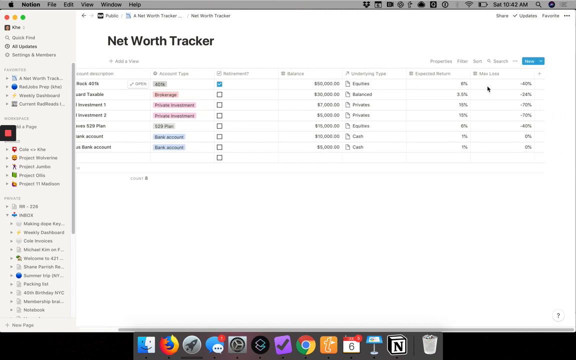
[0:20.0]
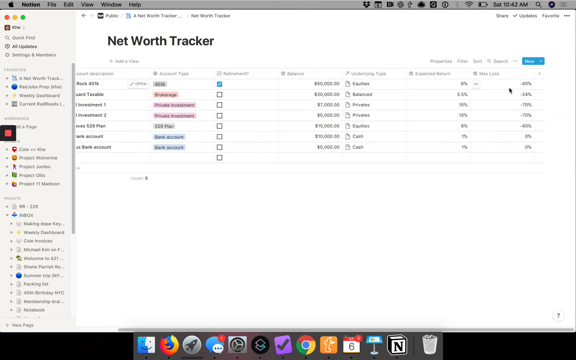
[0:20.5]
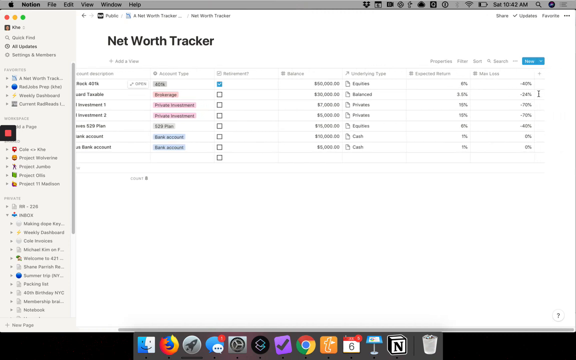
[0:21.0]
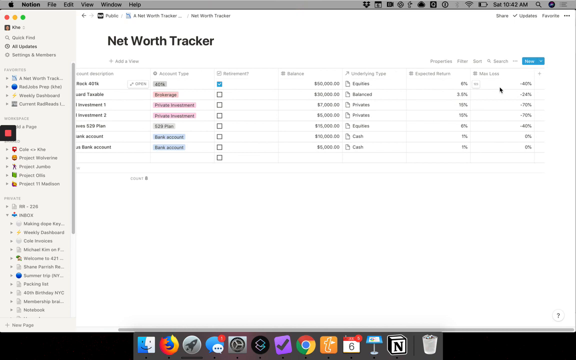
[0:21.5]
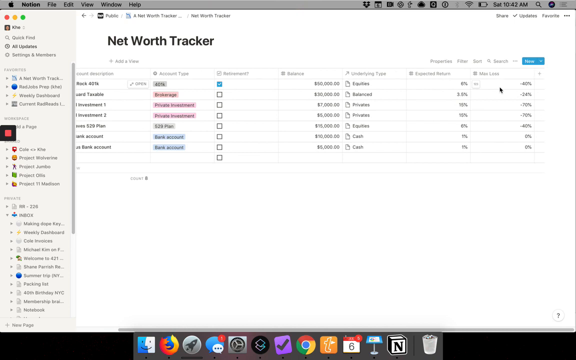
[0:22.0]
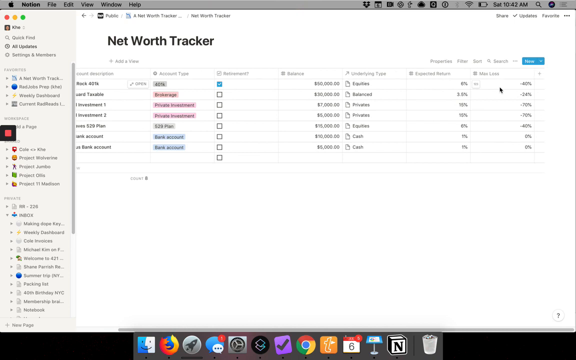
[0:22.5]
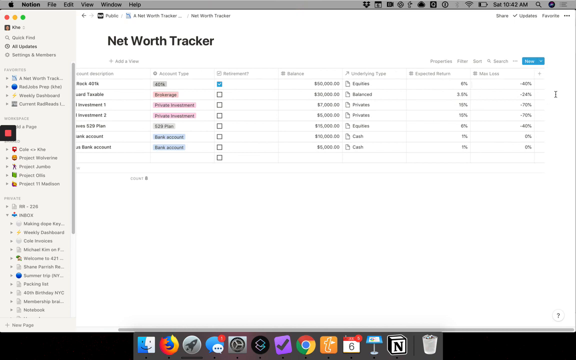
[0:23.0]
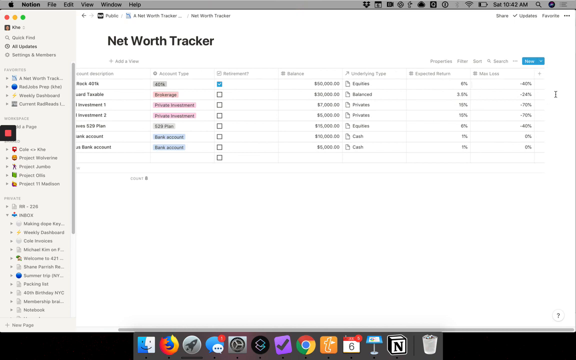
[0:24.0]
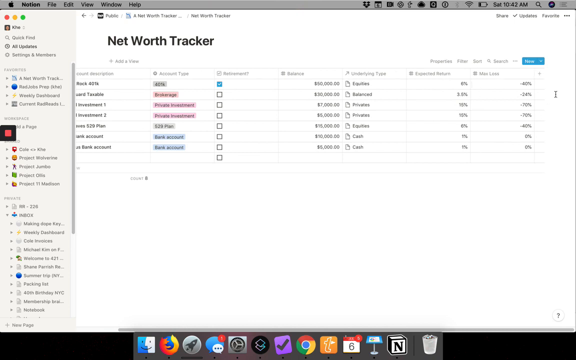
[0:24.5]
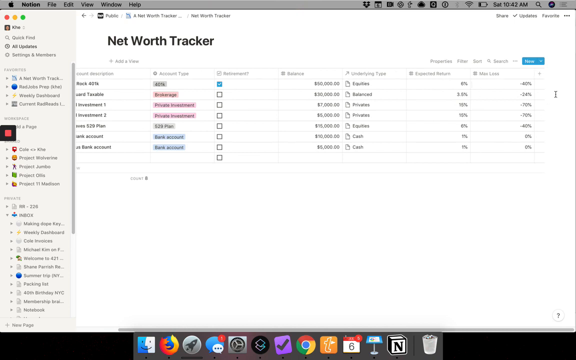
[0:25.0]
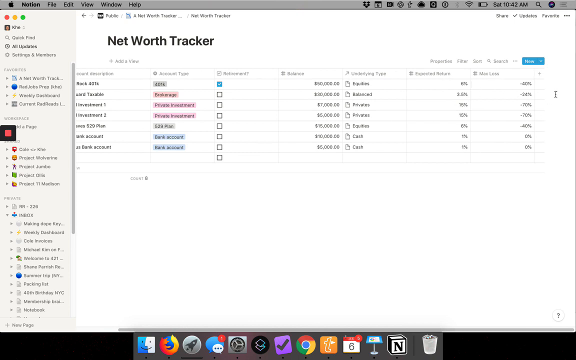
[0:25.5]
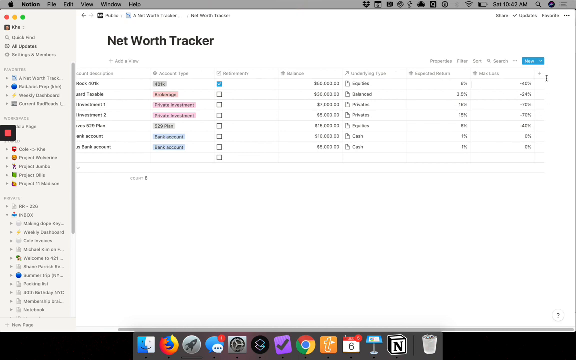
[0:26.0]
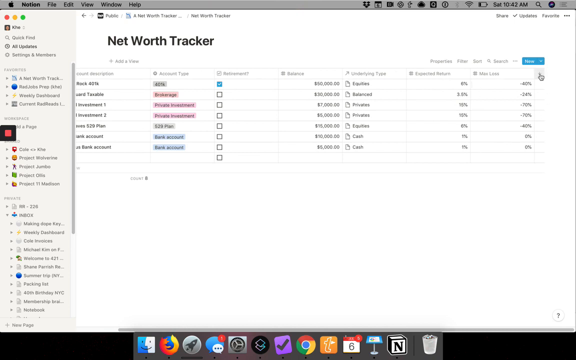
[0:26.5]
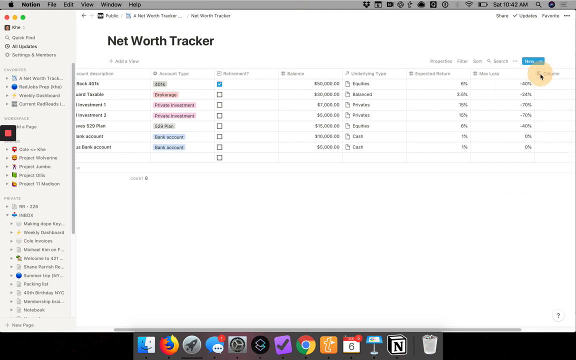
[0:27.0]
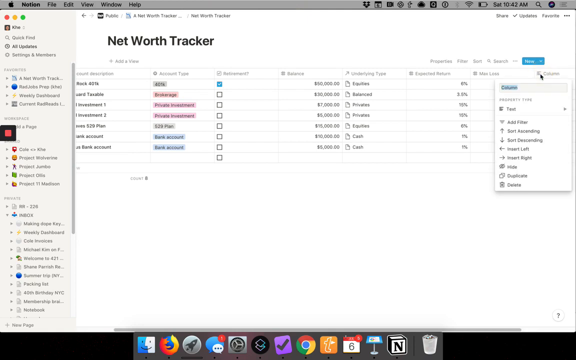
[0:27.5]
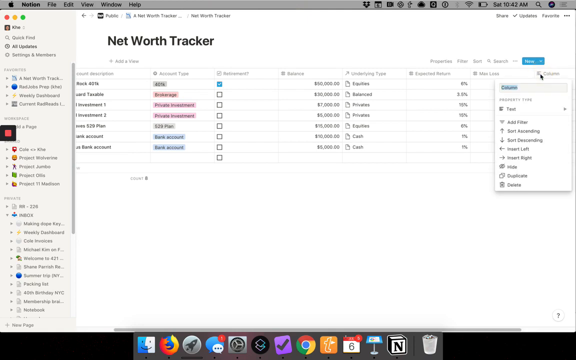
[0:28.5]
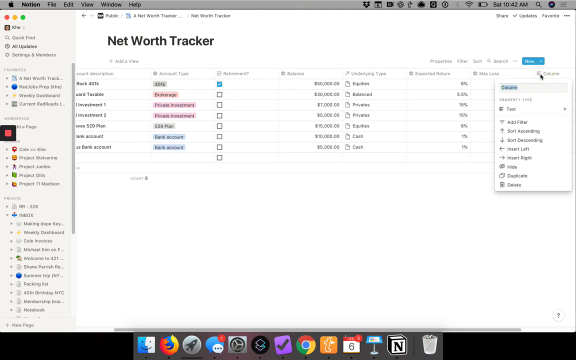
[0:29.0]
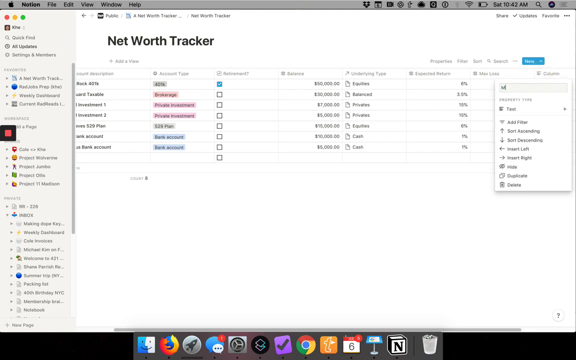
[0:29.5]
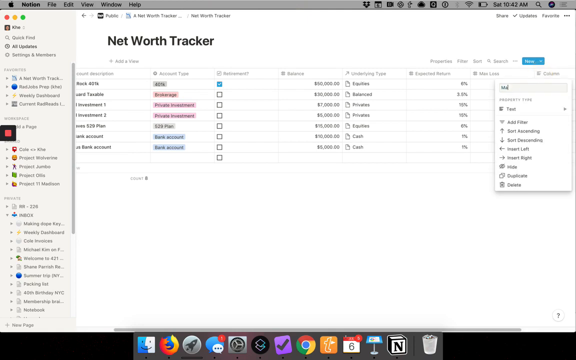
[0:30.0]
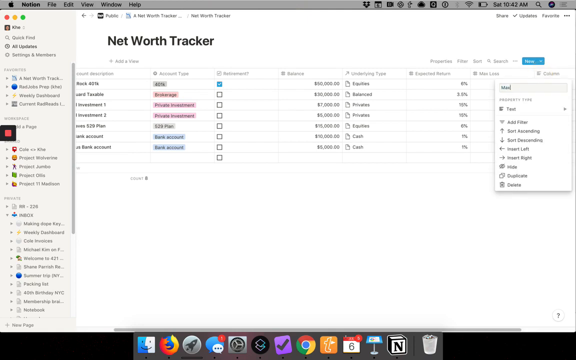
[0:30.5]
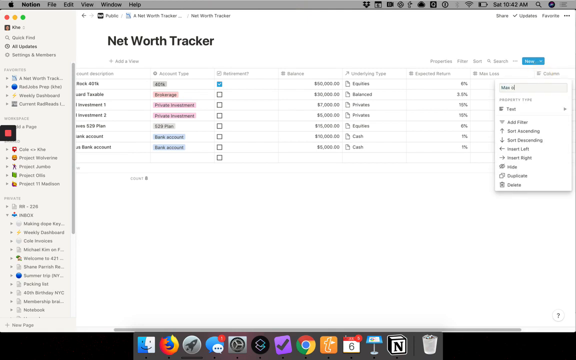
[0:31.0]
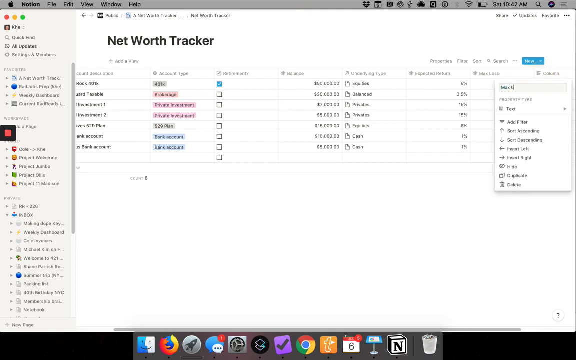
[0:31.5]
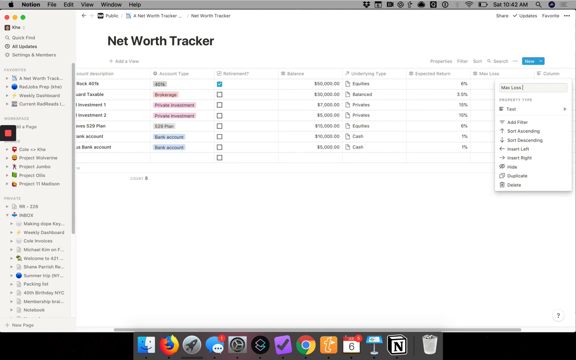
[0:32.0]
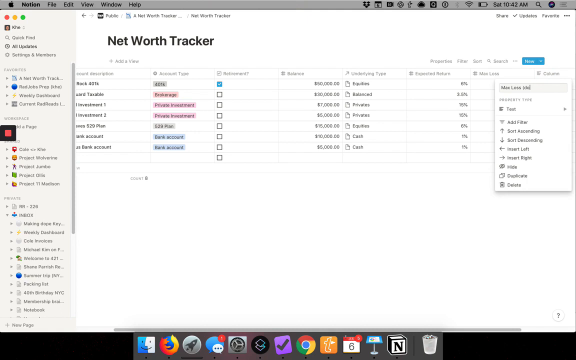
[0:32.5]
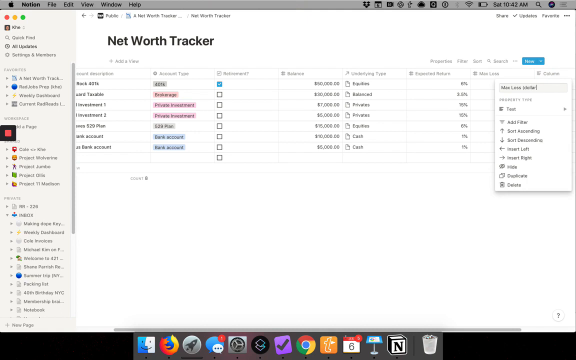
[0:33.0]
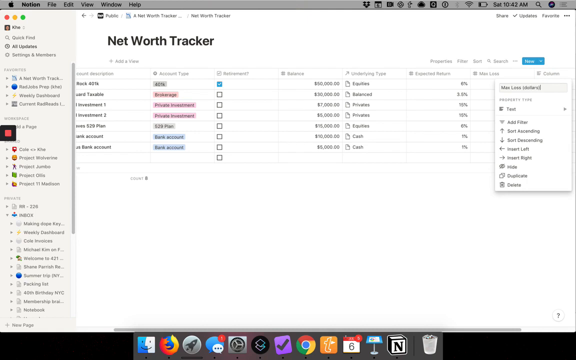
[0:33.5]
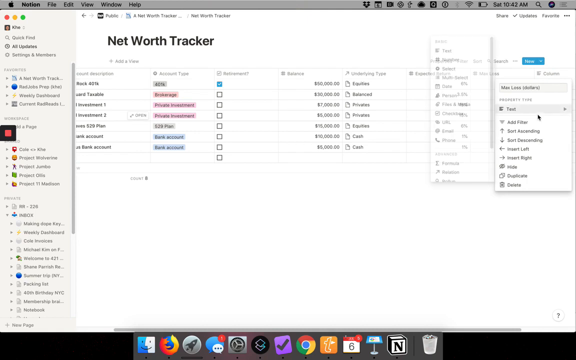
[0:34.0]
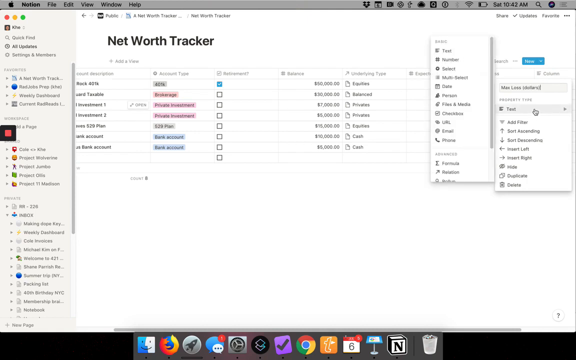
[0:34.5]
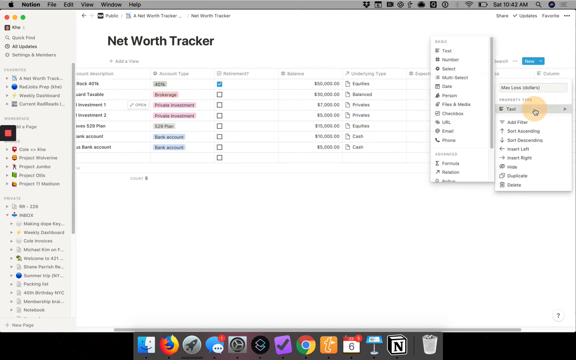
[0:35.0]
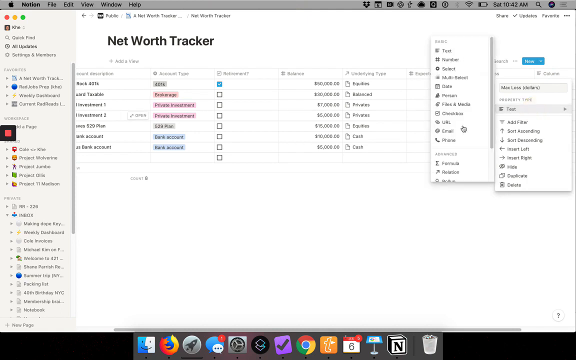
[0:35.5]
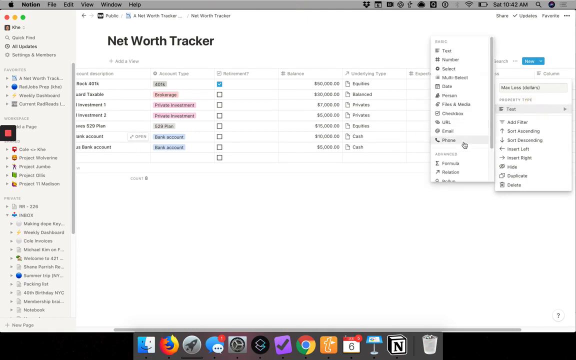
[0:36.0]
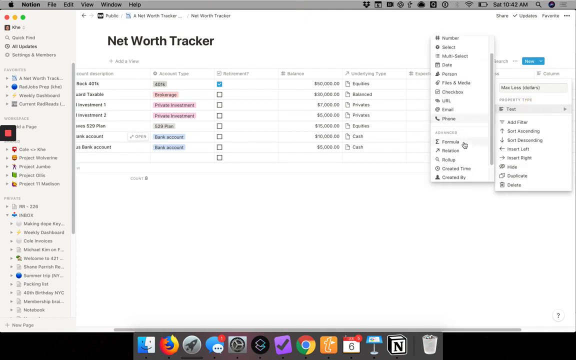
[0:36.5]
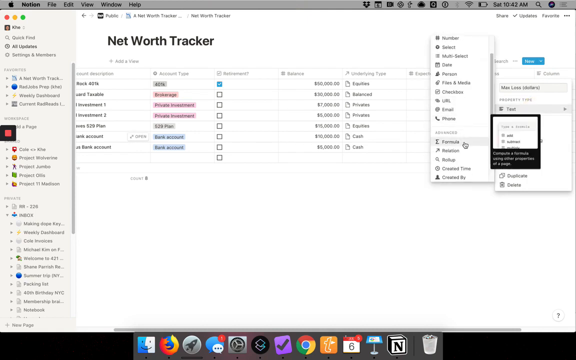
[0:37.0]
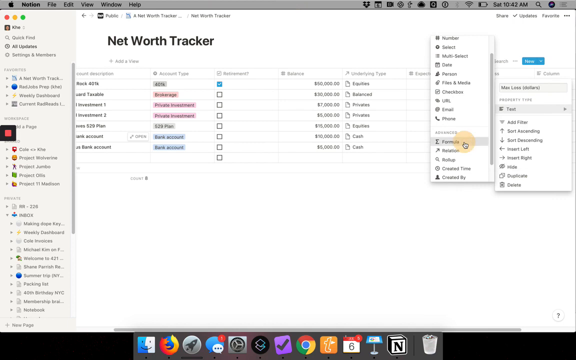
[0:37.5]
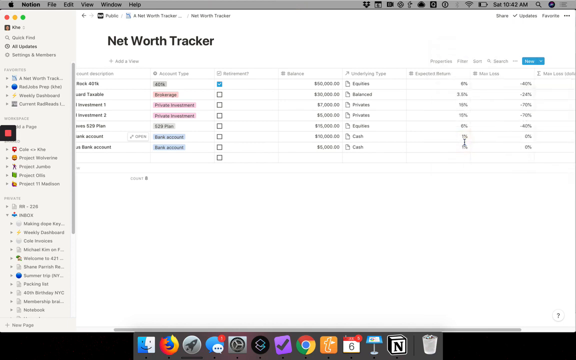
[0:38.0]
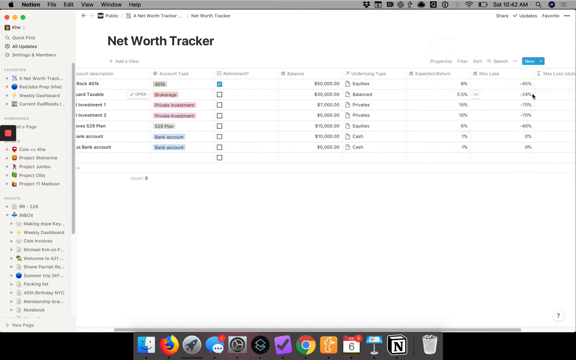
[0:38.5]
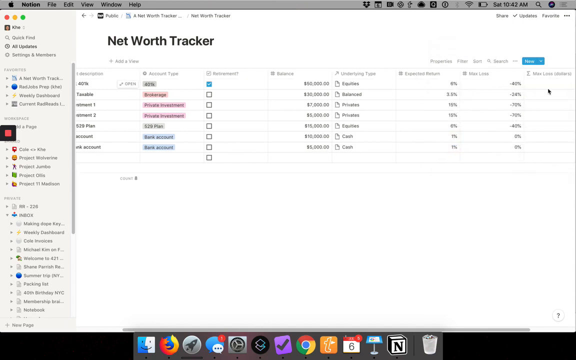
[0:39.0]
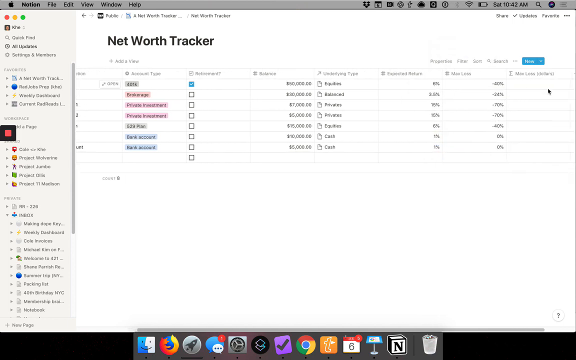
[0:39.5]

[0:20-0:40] A page is shown on what looks like an Apple computer, with a small Apple logo in the top left corner of the frame. Based on its design, it looks like it is probably at least 10 or 15 years old. The page has a white background and may be some kind of page rather than a website. At the top, "Net Worth Tracker" is written in a very thick bold font. There are six or seven columns, some highlighted pink and blue. A mouse on the far right part of the page switches from a black pointer to a vertical eye shape, then becomes a pointer again and clicks on one of the boxes. A small box pops up, the person controlling the mouse starts to type, and words appear. The cursor clicks a word in the box, then the person scrolls on the left in another box that has popped up and selects a word from it.